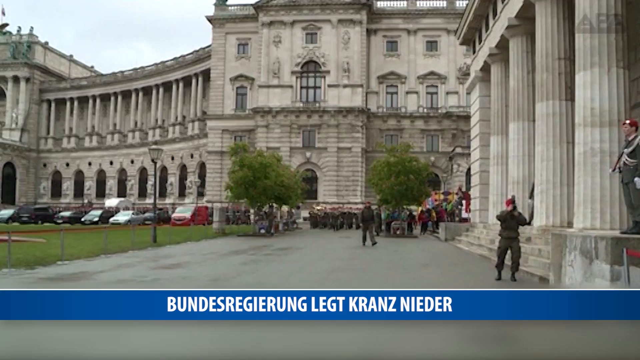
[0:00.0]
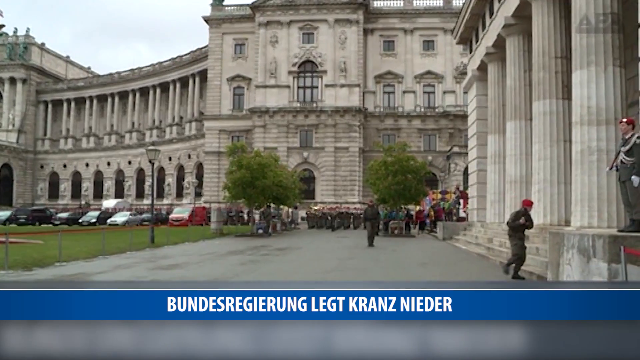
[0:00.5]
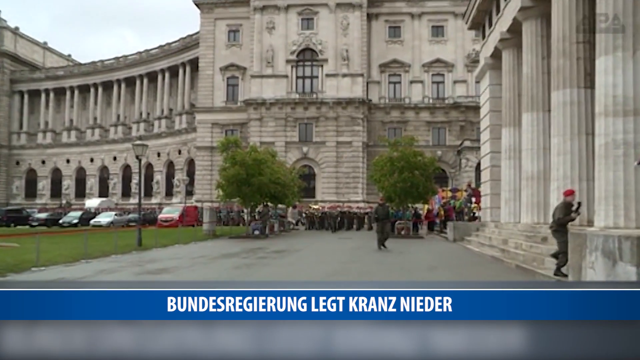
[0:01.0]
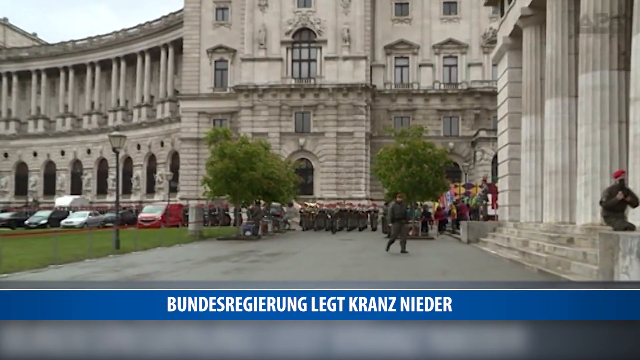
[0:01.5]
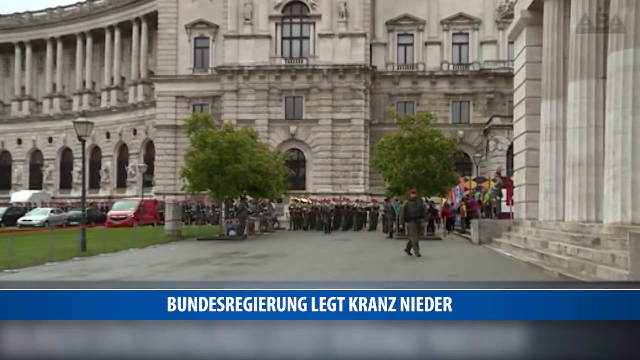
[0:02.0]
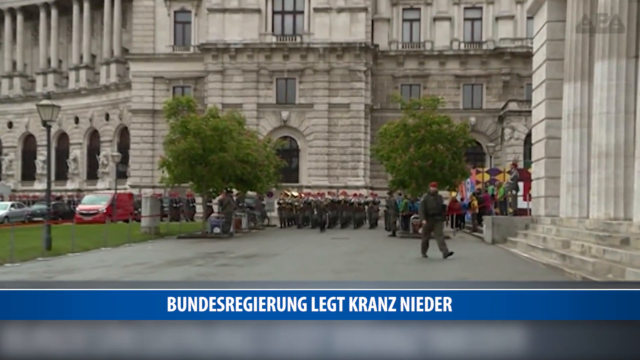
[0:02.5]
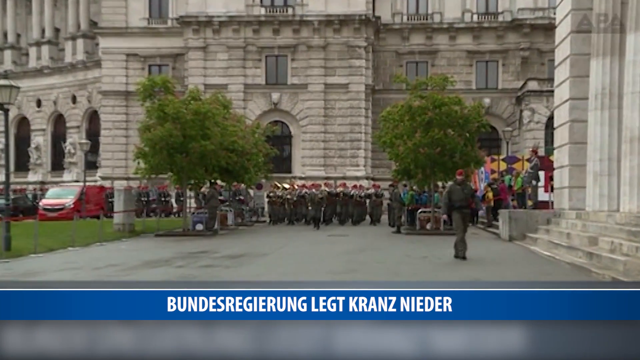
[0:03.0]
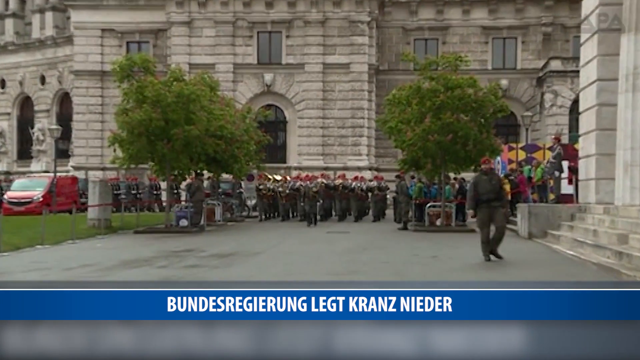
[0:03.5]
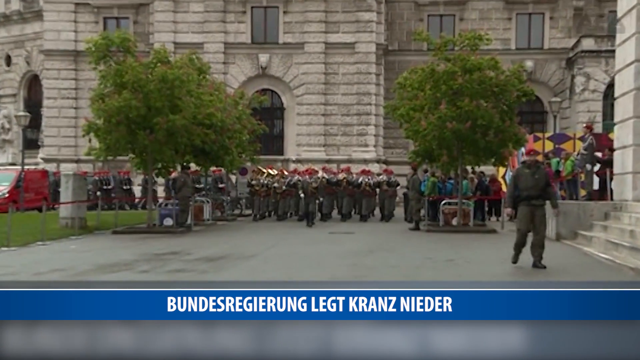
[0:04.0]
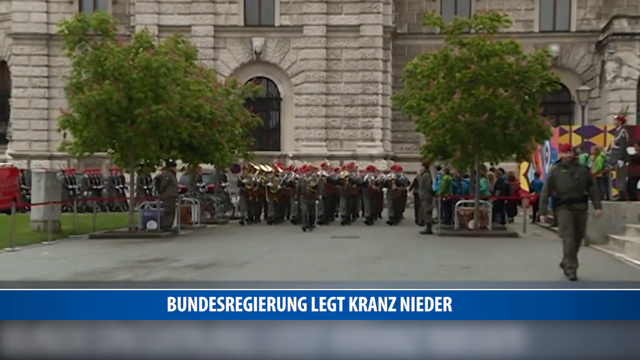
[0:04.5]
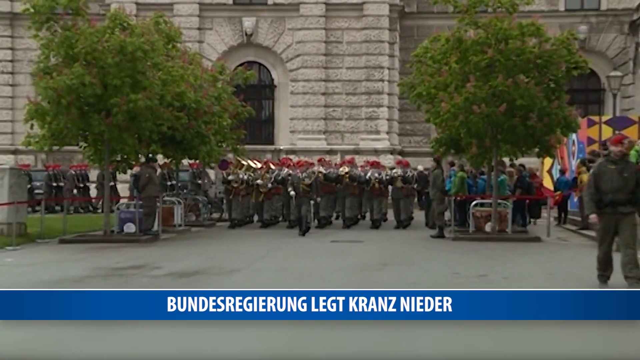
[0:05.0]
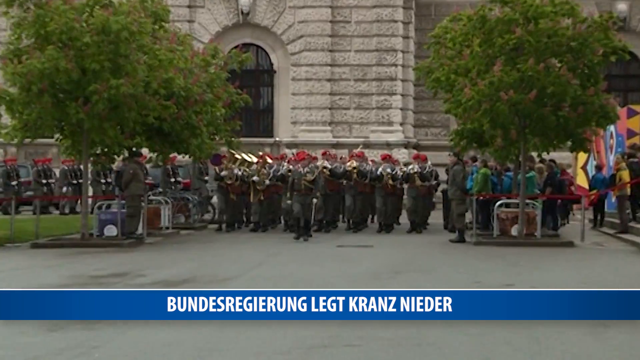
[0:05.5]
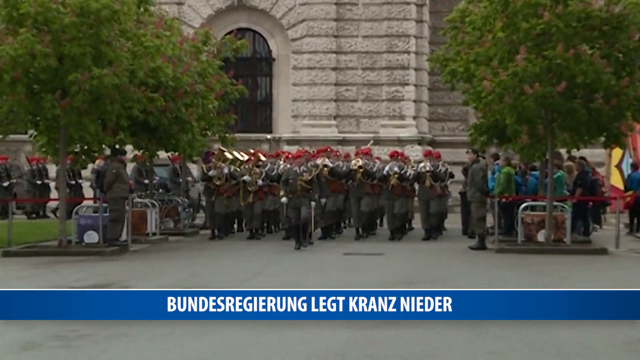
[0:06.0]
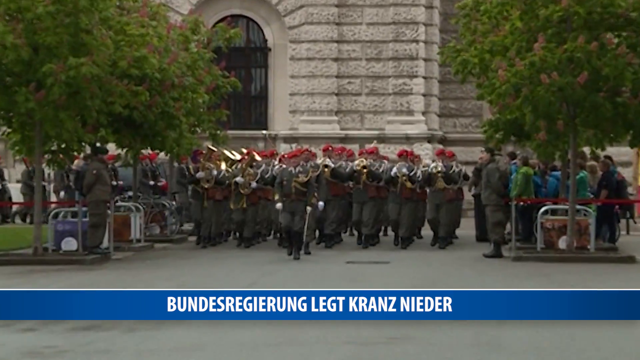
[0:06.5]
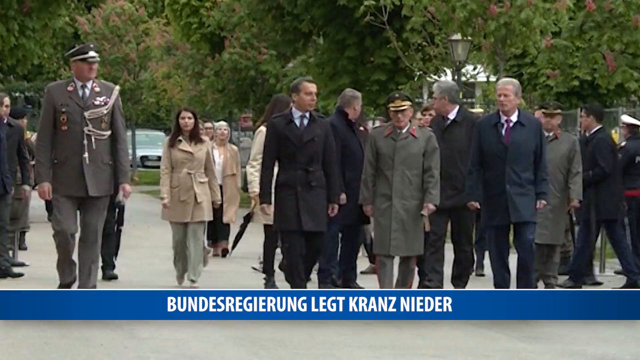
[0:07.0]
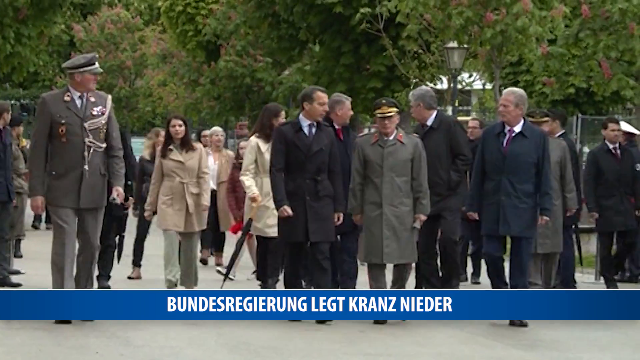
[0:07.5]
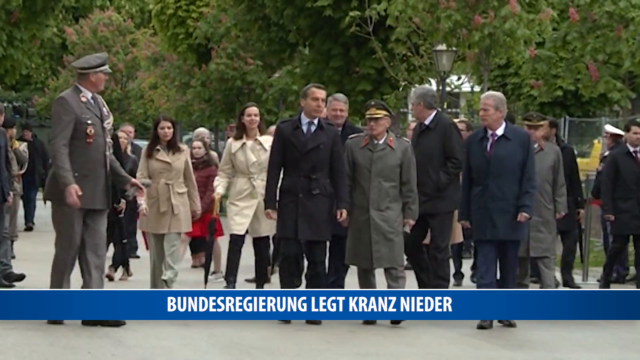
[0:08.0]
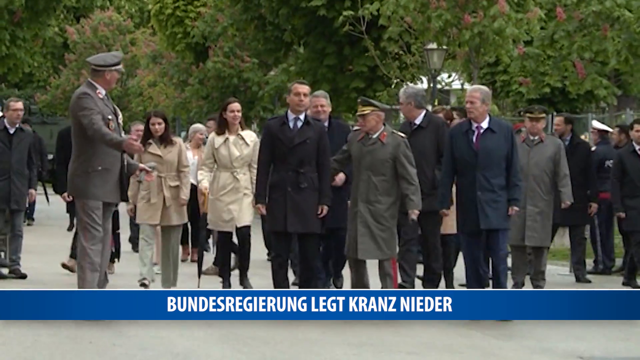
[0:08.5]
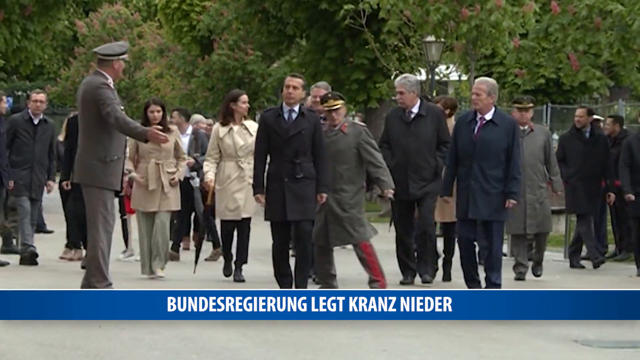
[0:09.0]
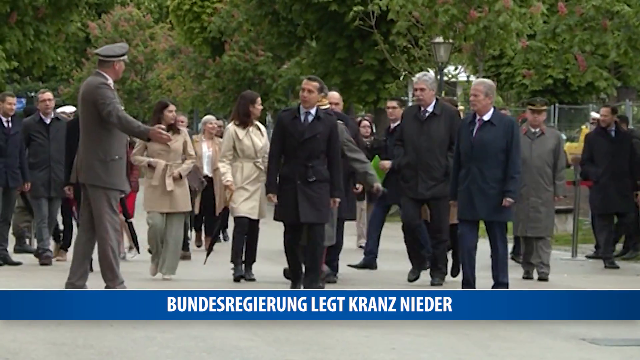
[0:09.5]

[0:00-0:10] Many very formal-looking people are present; they look like government people, possibly including the president. He is escorted by many people who march alongside, protecting him. A very tall, big building is shown. Soldiers in green uniforms salute him. The place is a state house. Big trees are on the left side.